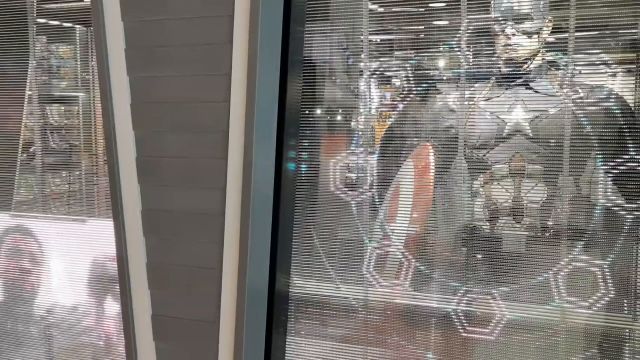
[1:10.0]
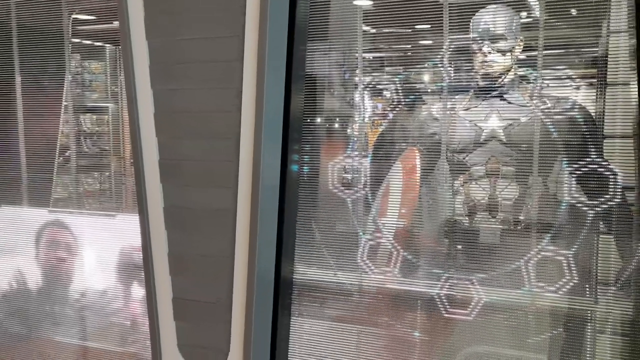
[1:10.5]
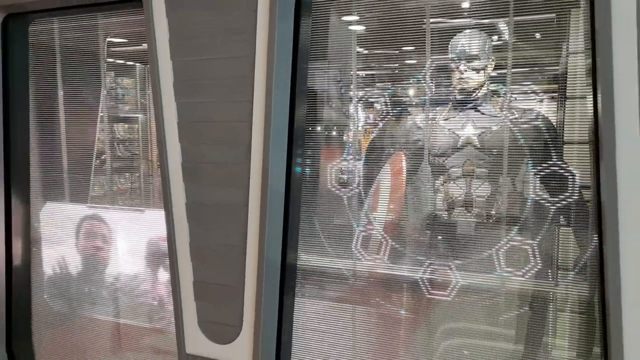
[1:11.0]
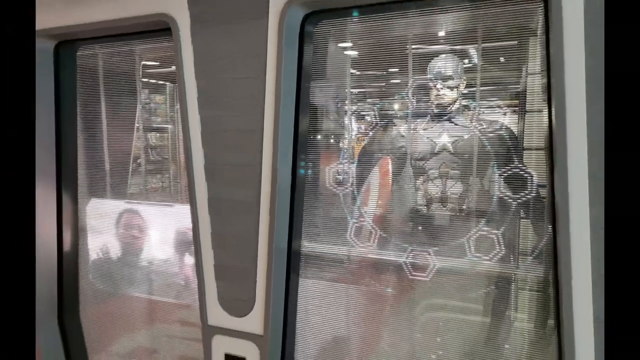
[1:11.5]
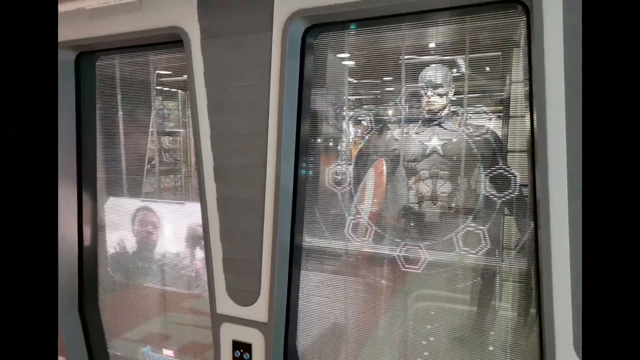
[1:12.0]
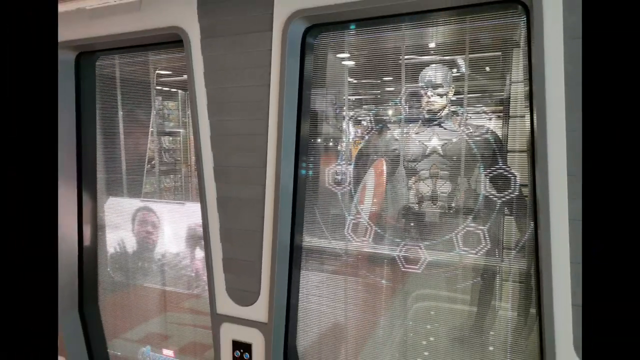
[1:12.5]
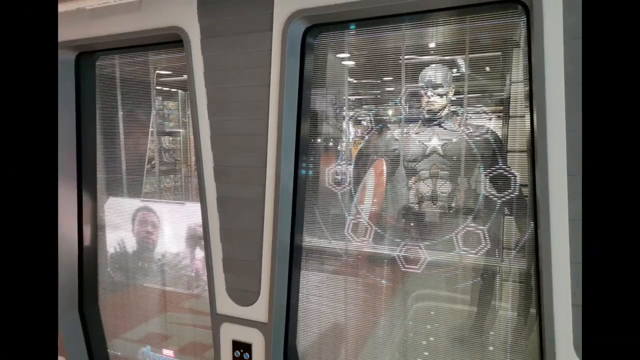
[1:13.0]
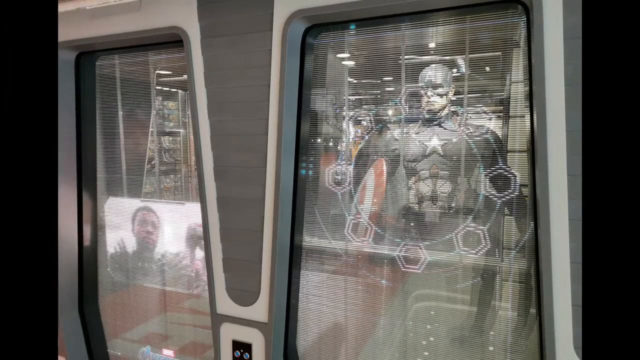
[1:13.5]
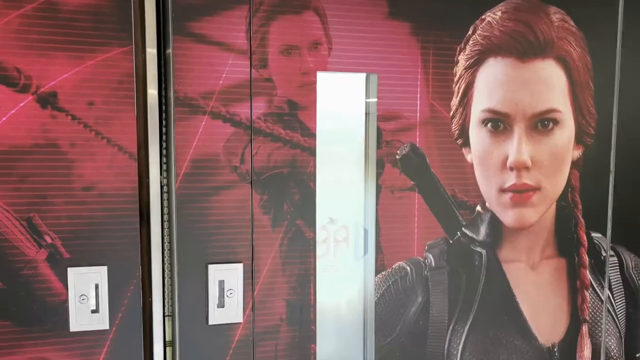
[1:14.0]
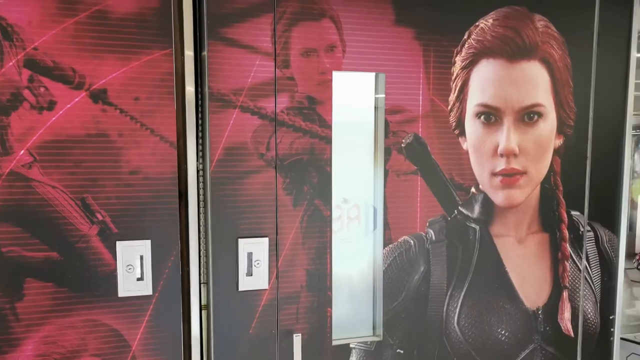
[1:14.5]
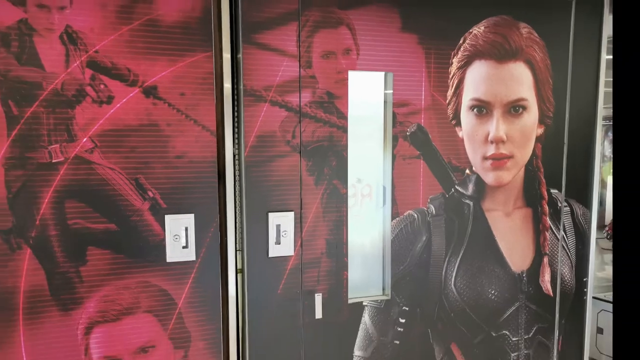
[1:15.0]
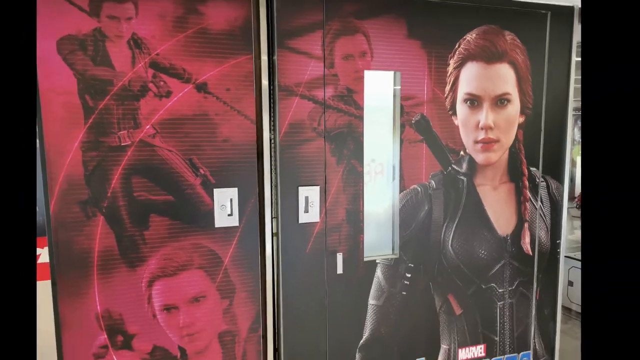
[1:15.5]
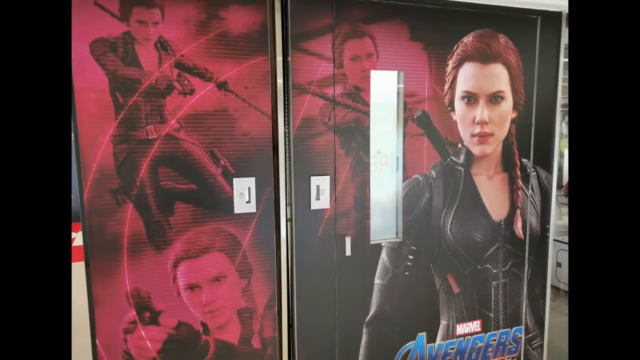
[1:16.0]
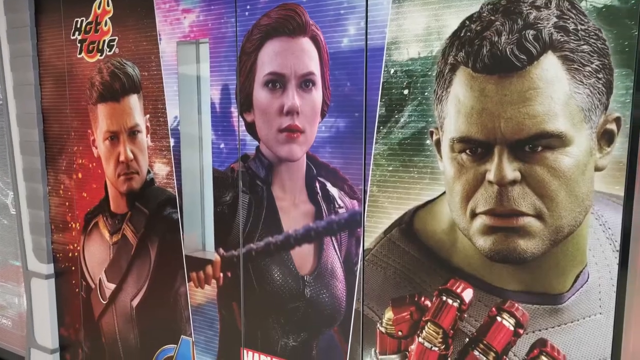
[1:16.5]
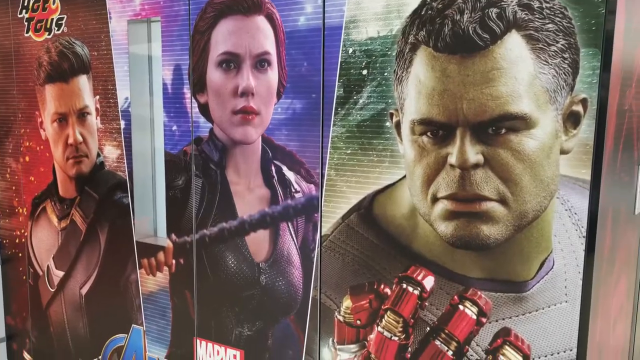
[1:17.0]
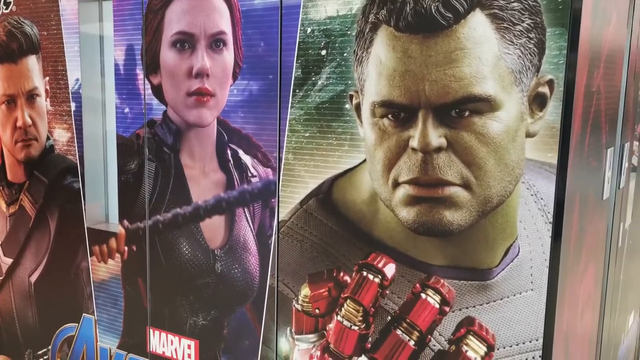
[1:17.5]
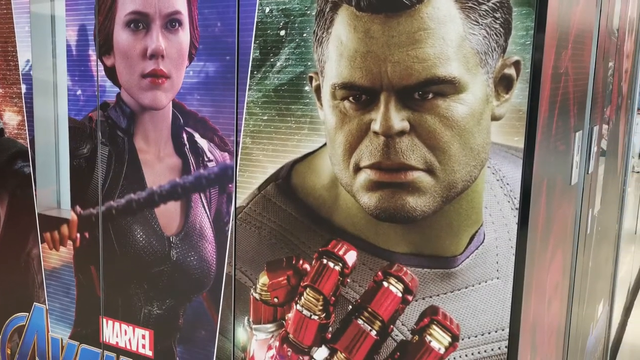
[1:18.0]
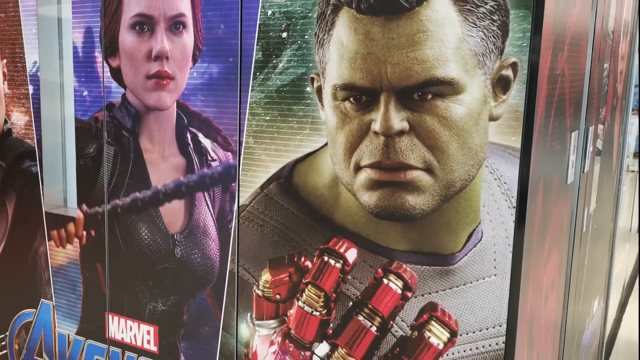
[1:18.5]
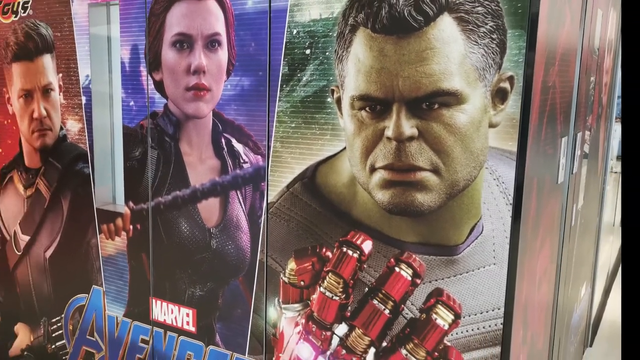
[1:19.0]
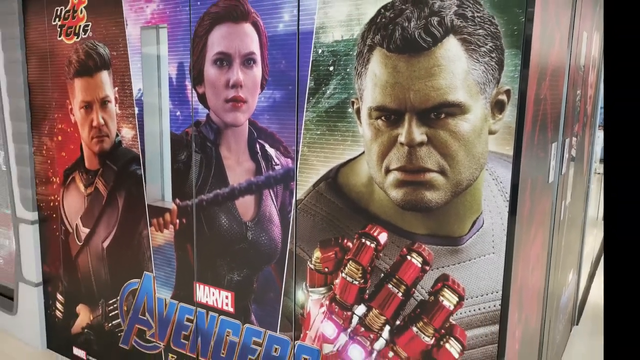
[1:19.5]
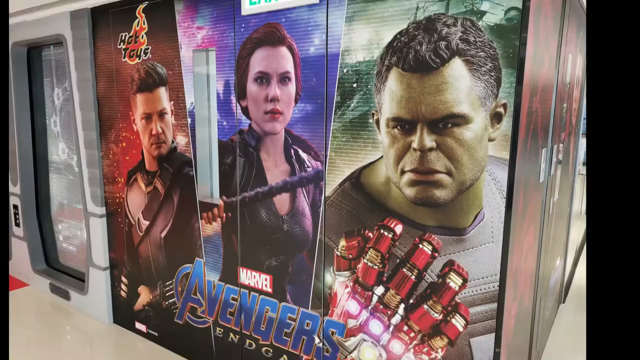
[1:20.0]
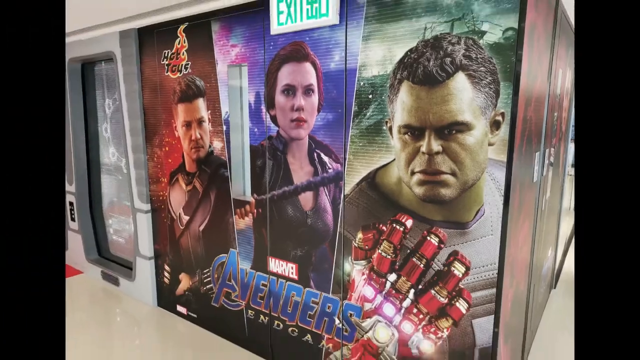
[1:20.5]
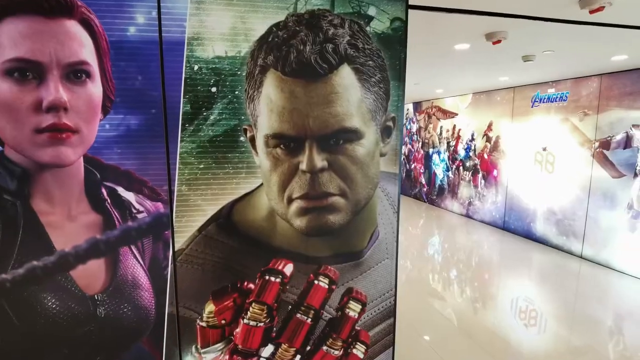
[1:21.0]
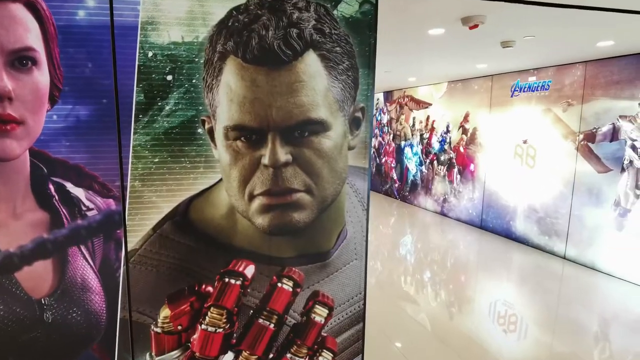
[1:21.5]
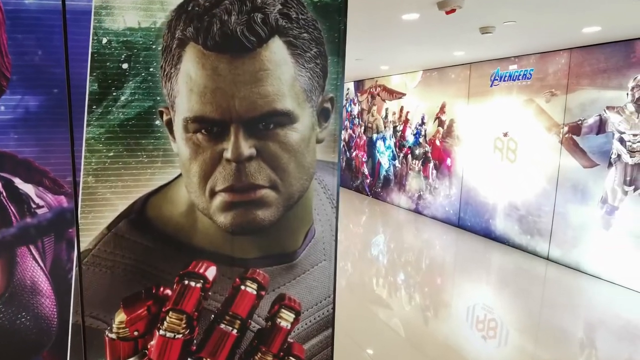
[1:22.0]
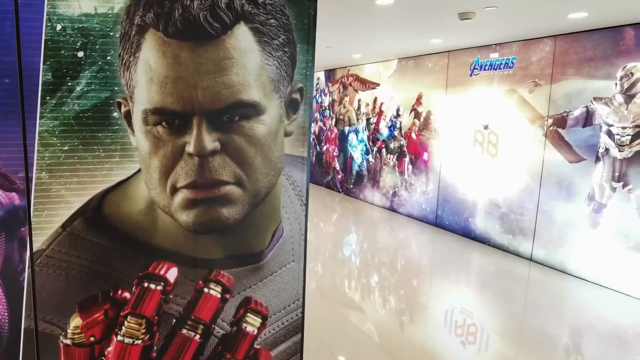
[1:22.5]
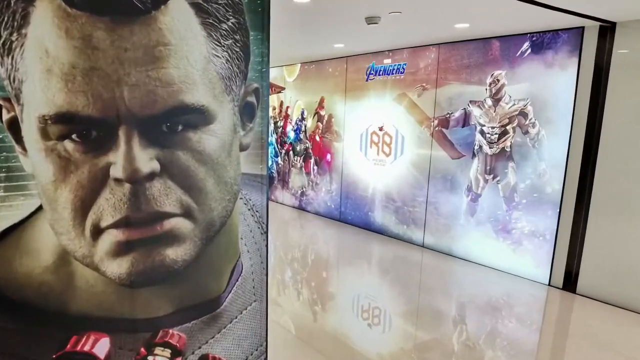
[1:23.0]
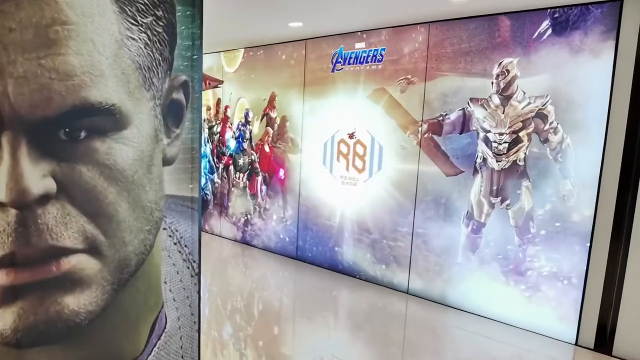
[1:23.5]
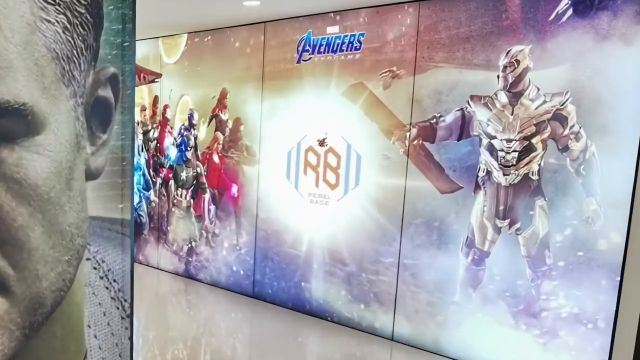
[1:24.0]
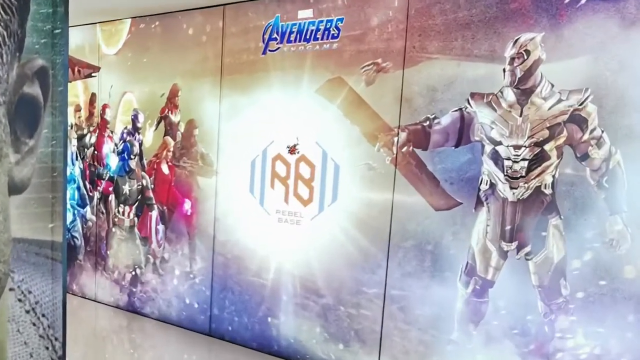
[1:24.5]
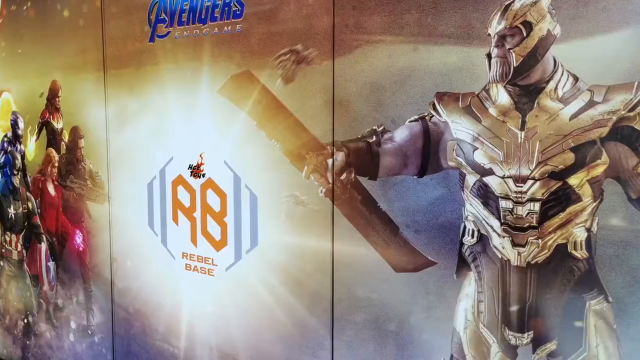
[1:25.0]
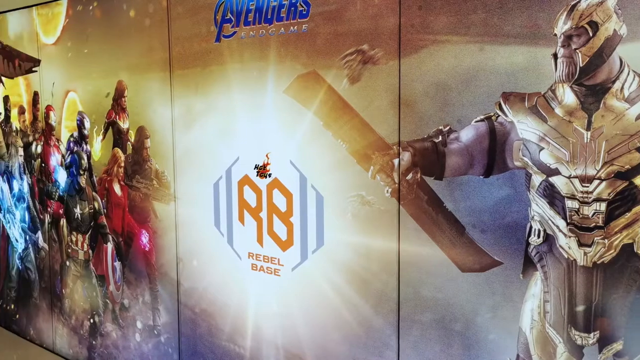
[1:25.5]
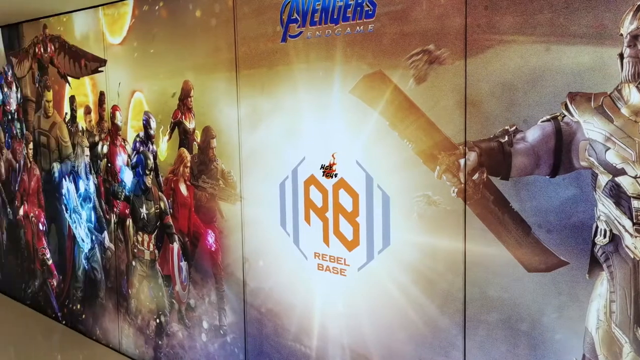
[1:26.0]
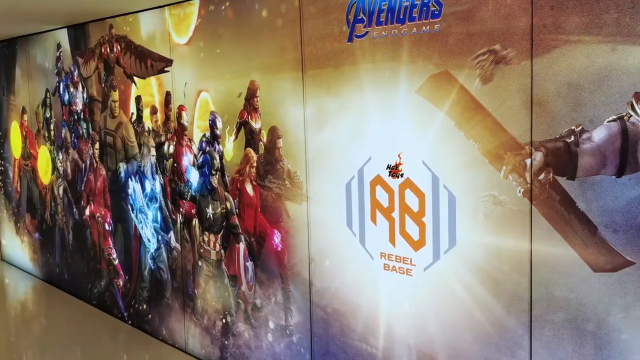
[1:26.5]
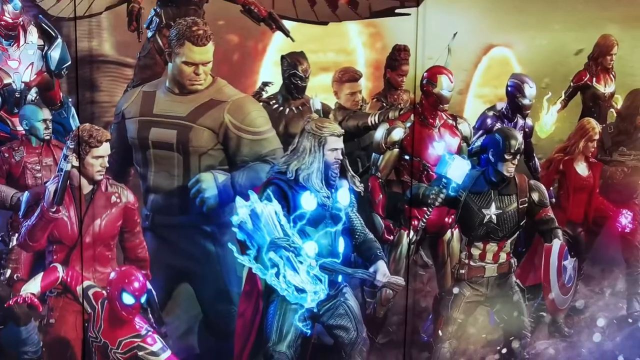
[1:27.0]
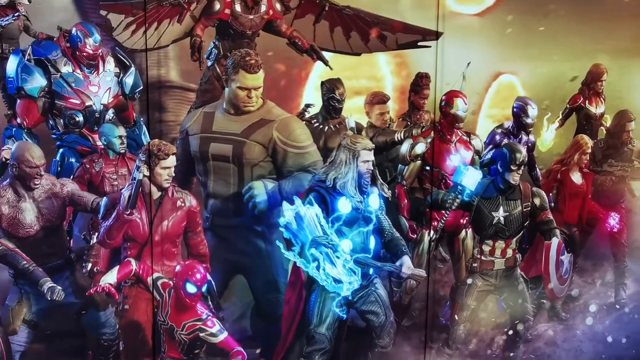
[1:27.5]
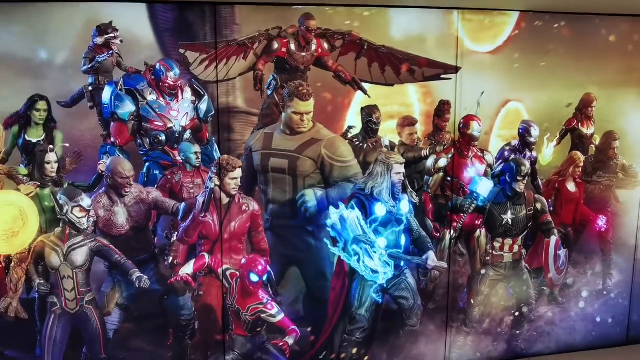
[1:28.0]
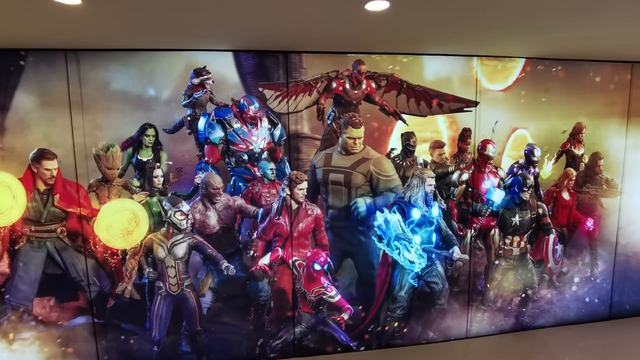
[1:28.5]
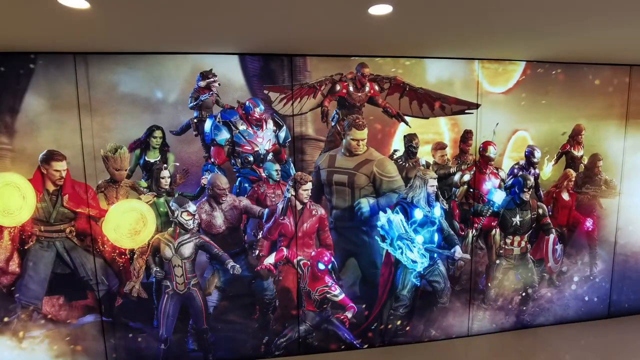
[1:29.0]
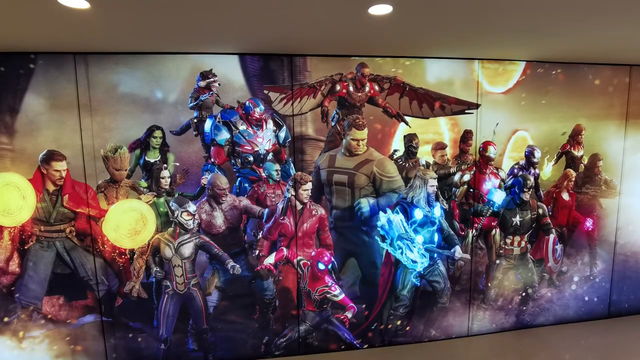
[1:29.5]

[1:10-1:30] The Avengers Endgame expo at Rebel Base continues. The Captain America statue is shown inside its display case as the camera pans out from it, then moves to show the side and the background, which shows the characters Hawkeye and Black Widow, with some of their action figures up close in the background on the wall. Another room shows the Avengers versus Thanos and advertises Rebel Base, with a giant wall mural of all the Avengers Endgame figures going up against Thanos.